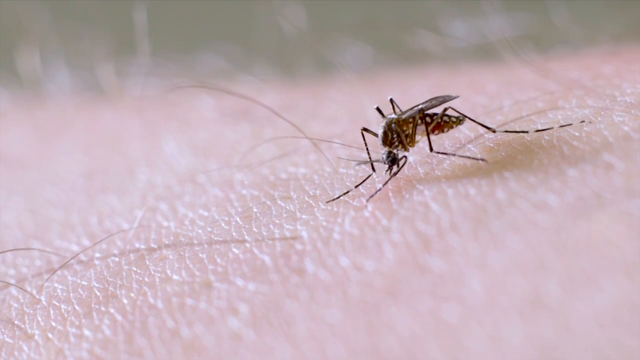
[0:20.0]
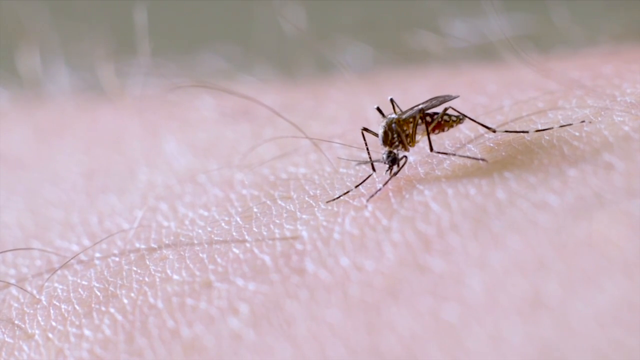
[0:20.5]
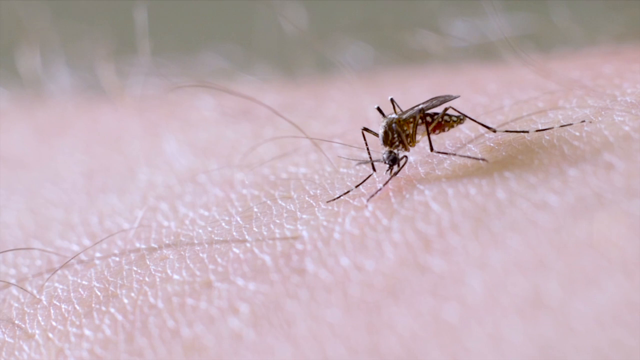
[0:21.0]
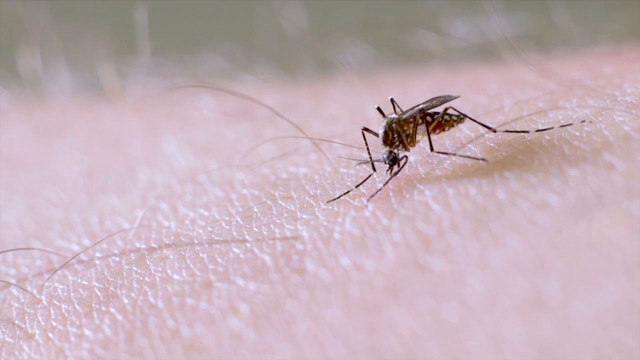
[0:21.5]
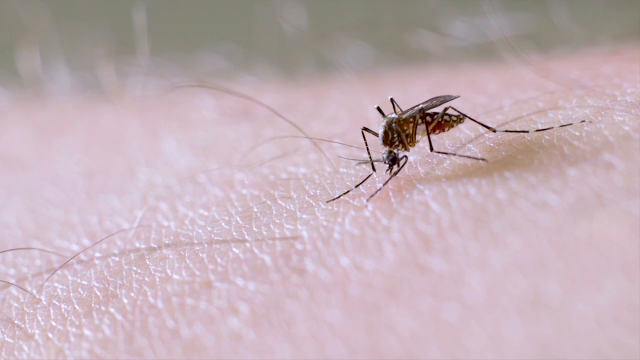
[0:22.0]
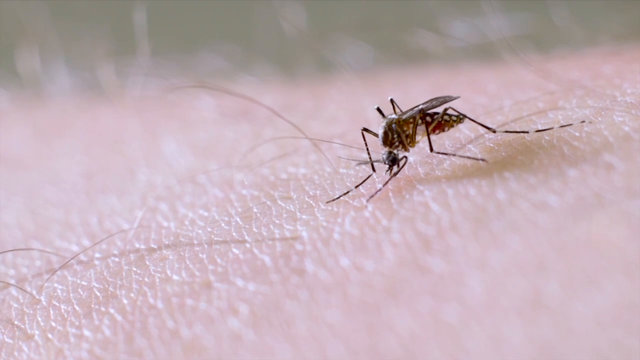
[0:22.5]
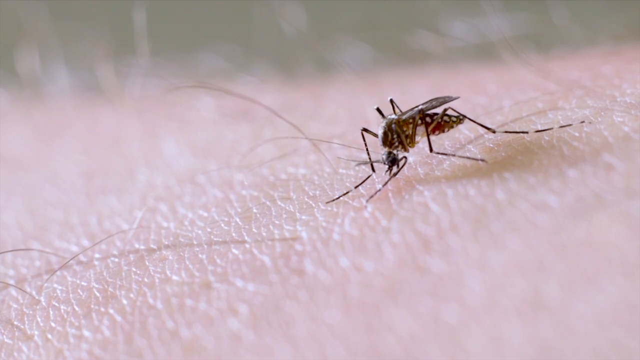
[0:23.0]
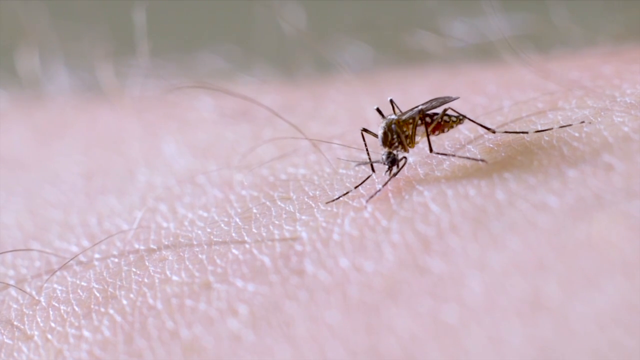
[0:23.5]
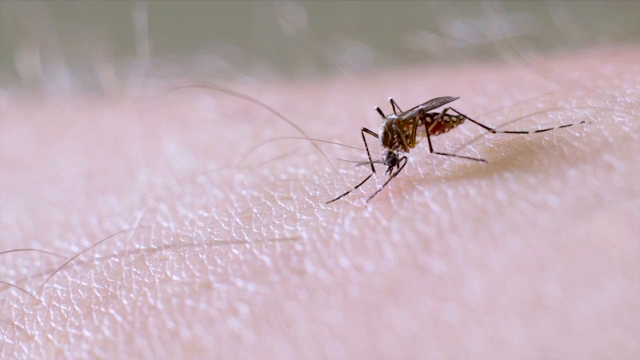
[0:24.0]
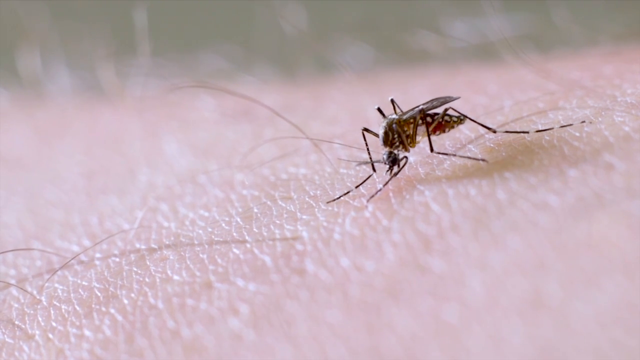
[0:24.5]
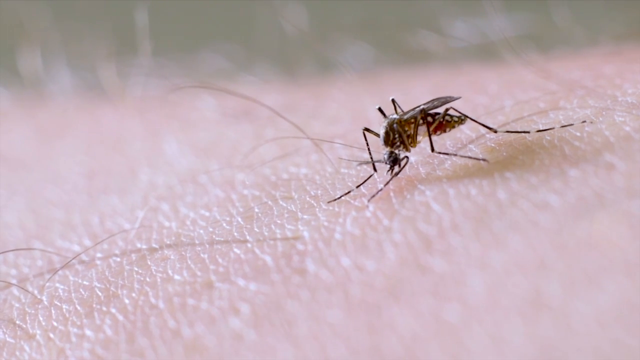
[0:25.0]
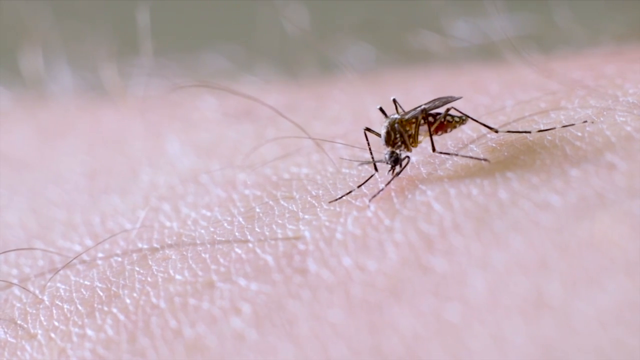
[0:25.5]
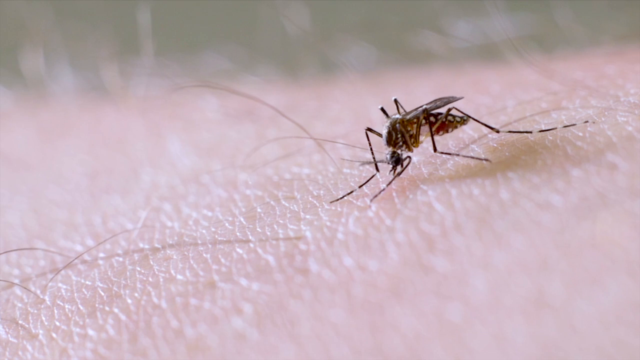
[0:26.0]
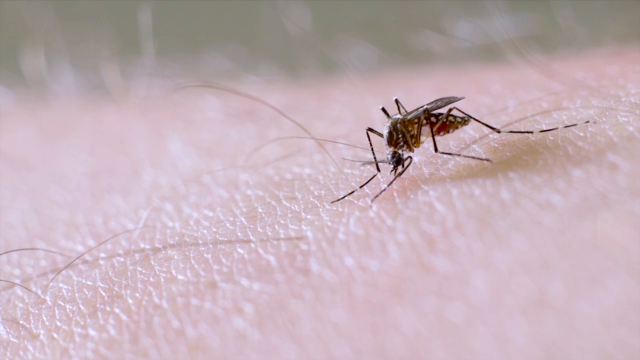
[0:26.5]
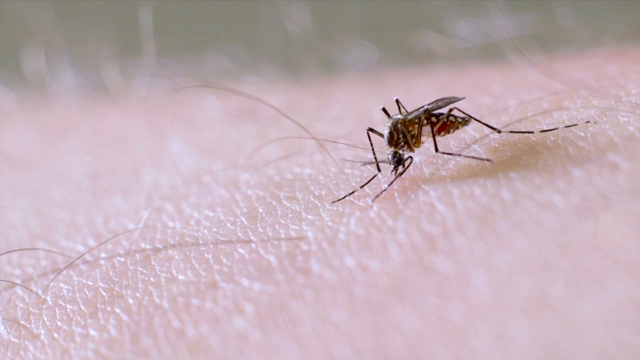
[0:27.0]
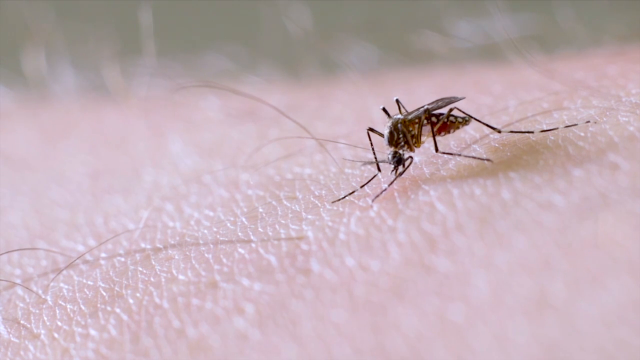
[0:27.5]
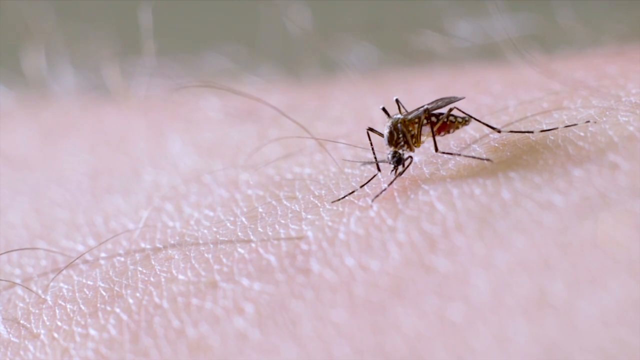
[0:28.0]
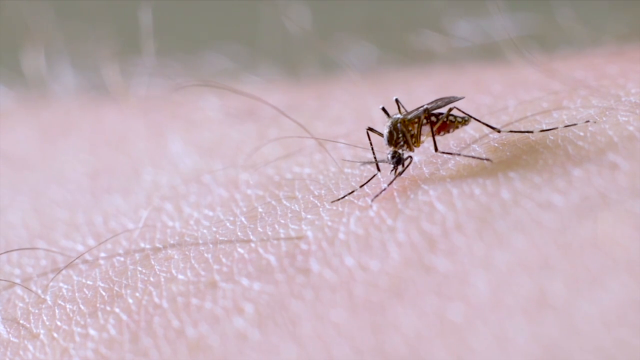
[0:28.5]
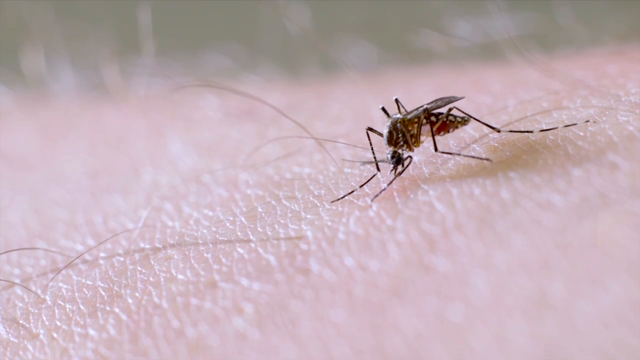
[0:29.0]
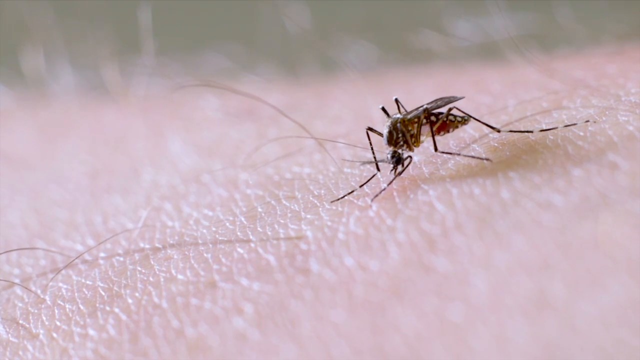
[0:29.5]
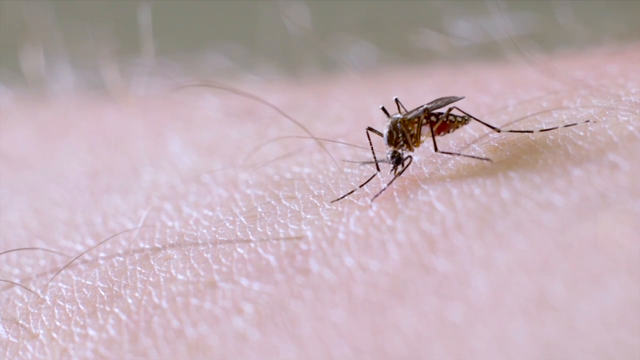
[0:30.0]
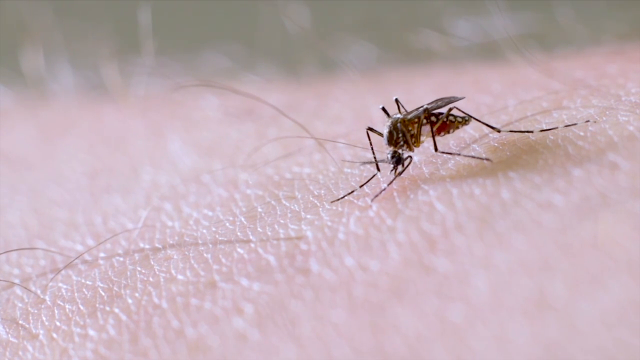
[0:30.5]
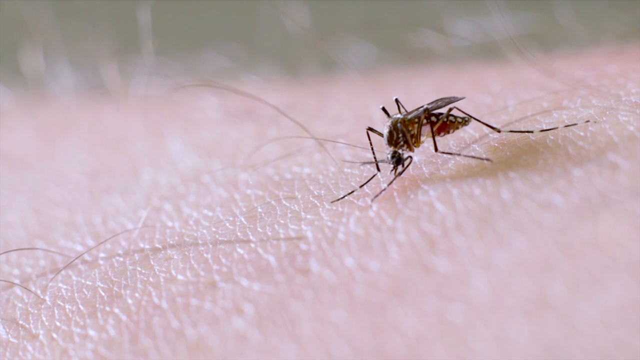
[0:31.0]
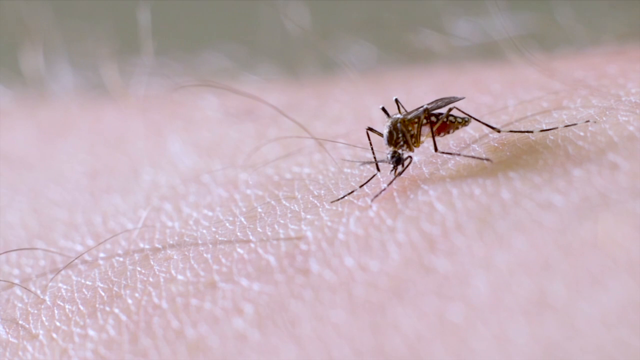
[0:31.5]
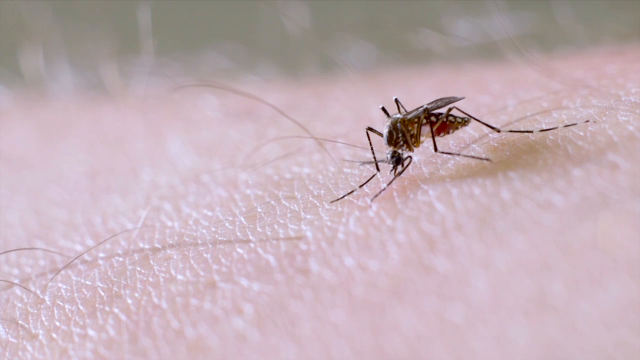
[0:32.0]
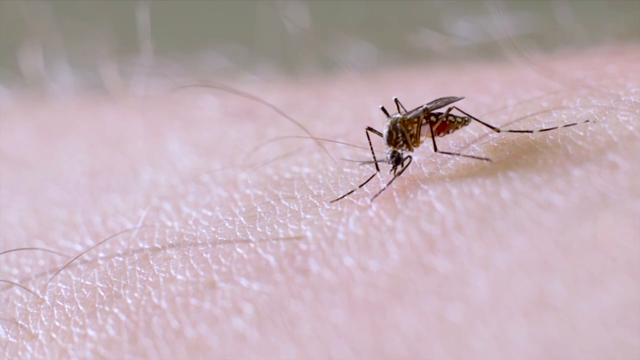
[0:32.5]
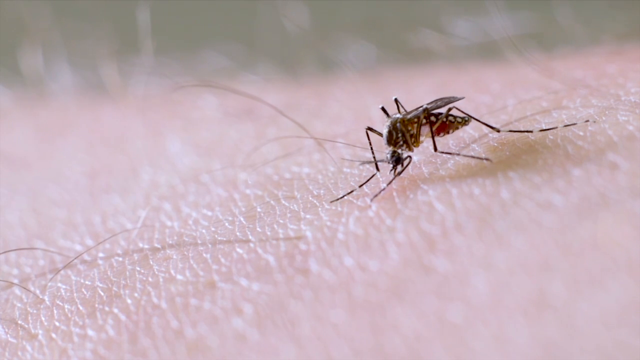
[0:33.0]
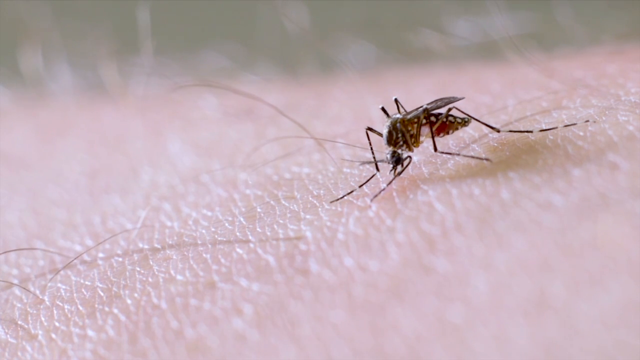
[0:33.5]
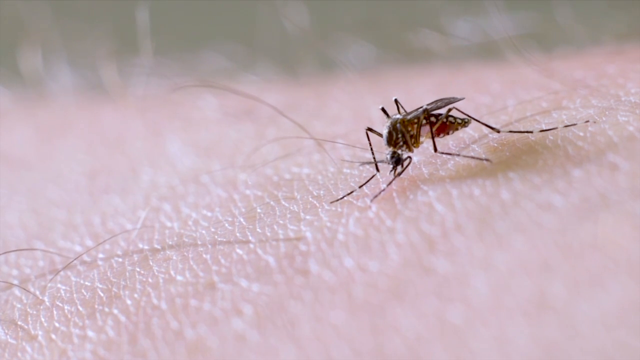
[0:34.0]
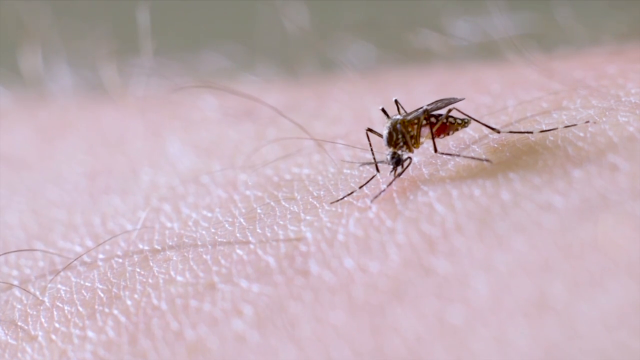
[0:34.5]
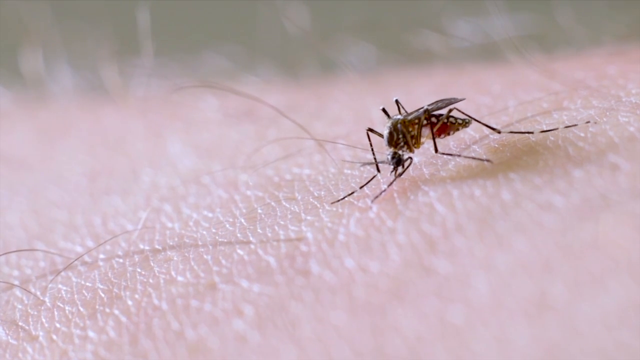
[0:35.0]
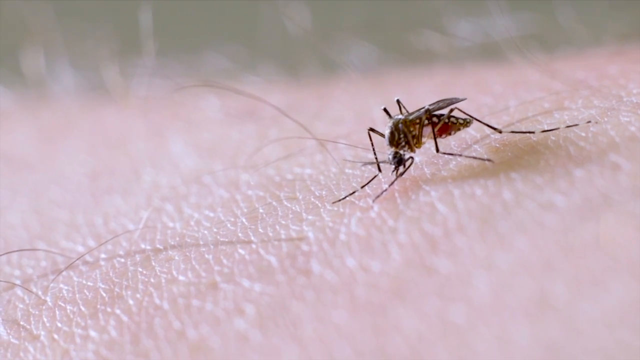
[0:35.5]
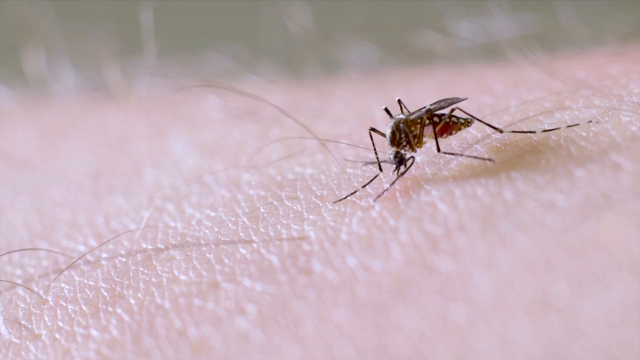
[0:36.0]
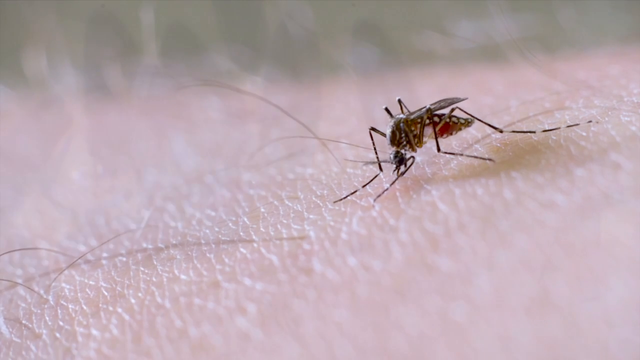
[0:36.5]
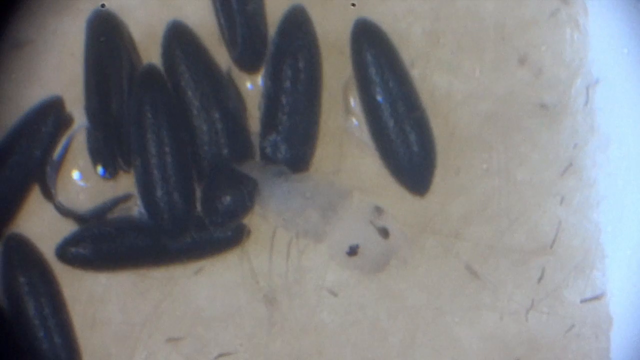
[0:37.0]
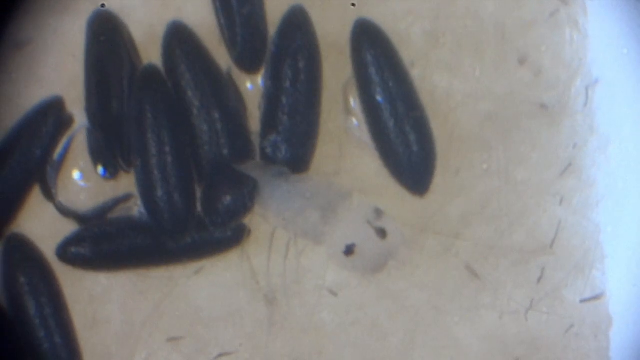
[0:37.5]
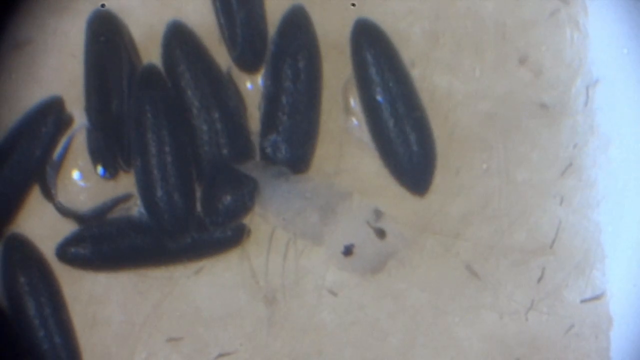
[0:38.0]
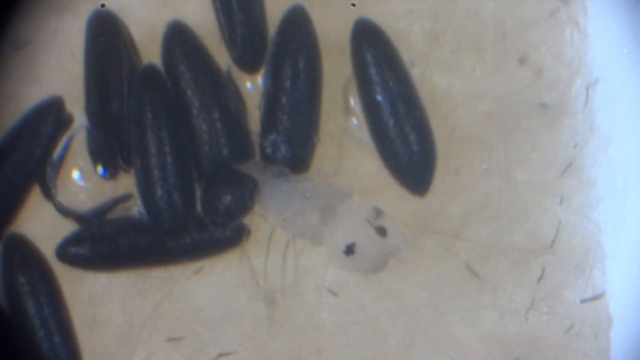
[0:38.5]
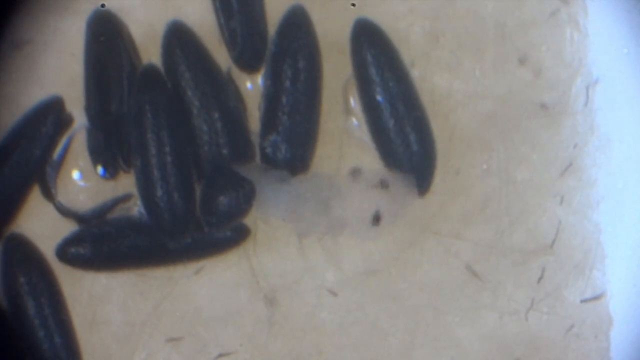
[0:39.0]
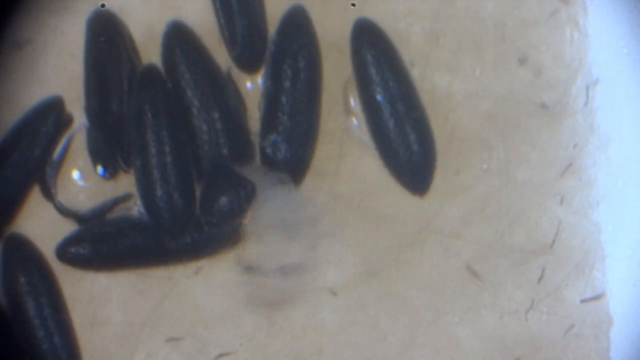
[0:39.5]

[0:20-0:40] The mosquito continues sucking blood from the hairy arm; the person's face is still not shown. Some still images also appear. The mosquito is brown with white patches. The scene then changes to what look like black worms, along with one translucent worm with black patches that moves from side to side as it maneuvers between the black worms. It seems to be stuck under one of the black worms and is trying to move and make its way out. This appears to be on a person's arm: the background looks like a white person's skin, with black strips also showing, so the colors are black, translucent and the white skin.